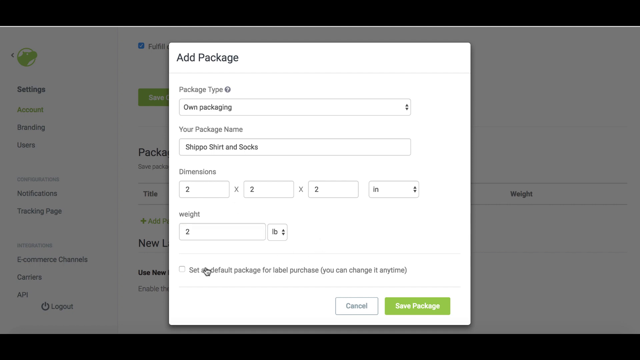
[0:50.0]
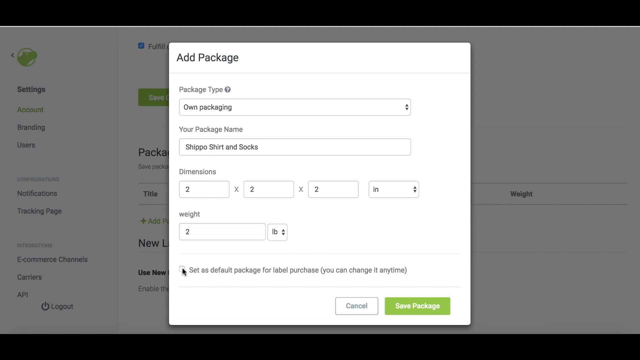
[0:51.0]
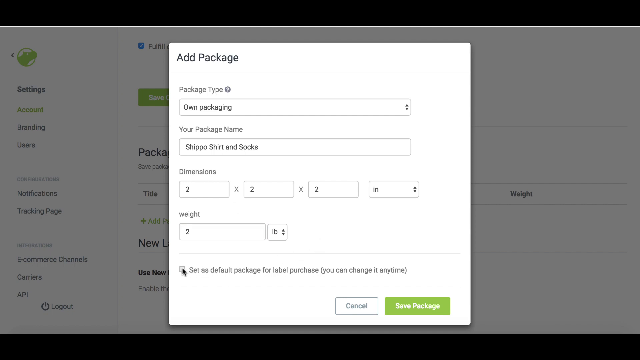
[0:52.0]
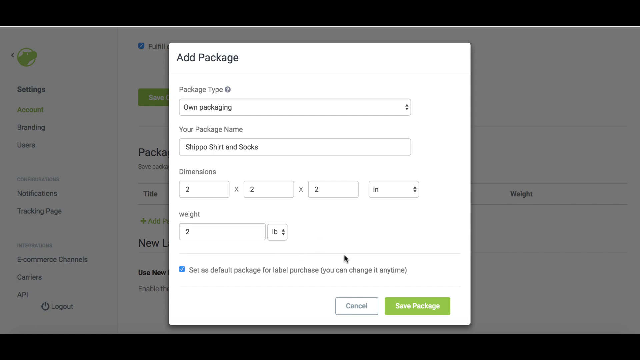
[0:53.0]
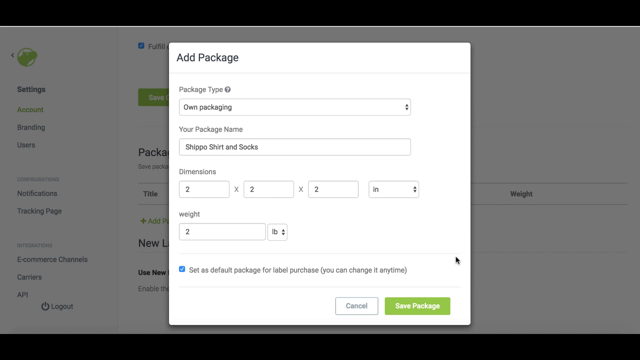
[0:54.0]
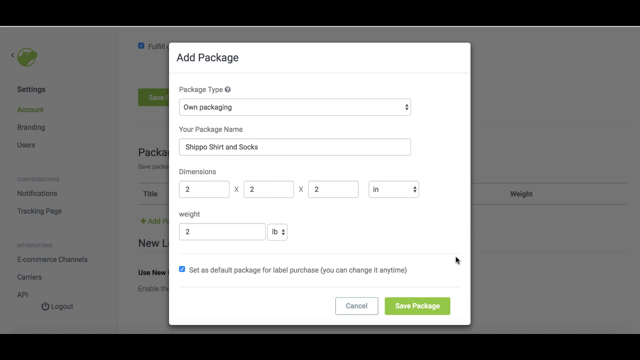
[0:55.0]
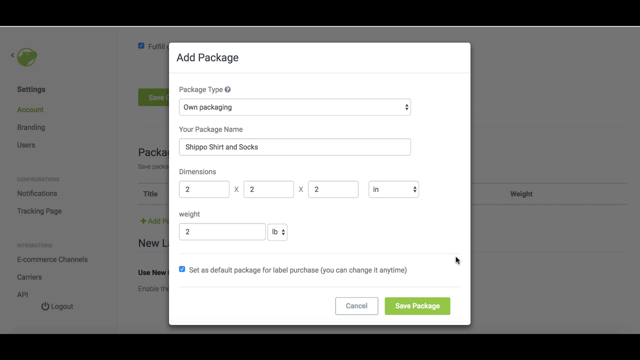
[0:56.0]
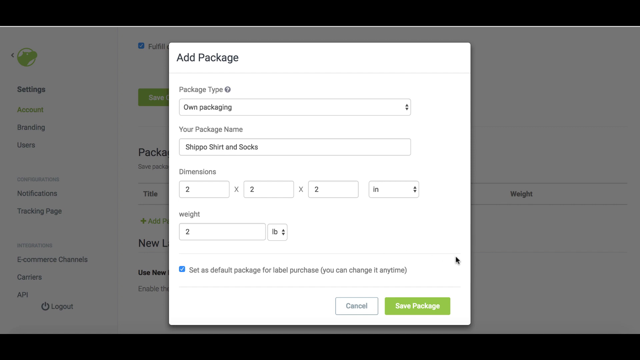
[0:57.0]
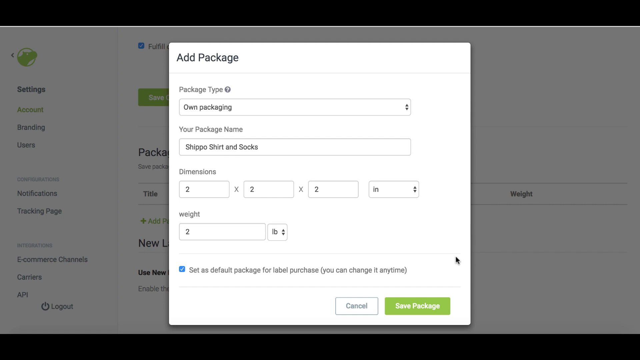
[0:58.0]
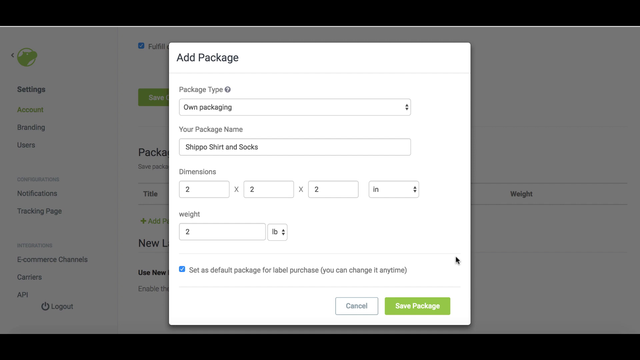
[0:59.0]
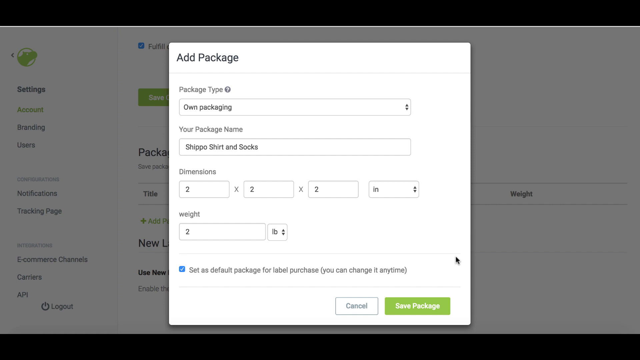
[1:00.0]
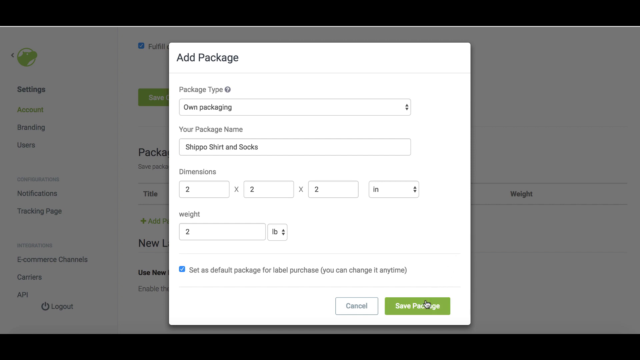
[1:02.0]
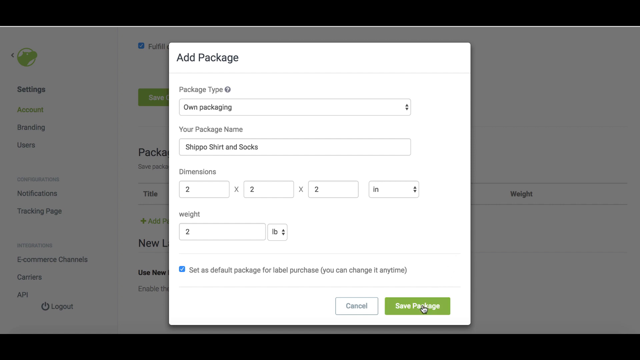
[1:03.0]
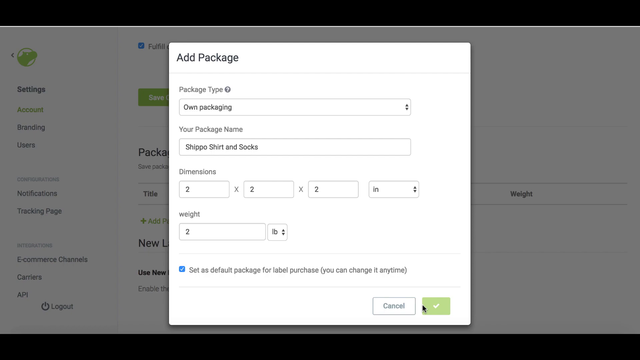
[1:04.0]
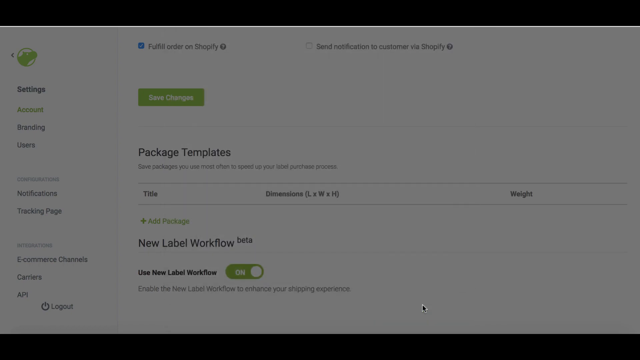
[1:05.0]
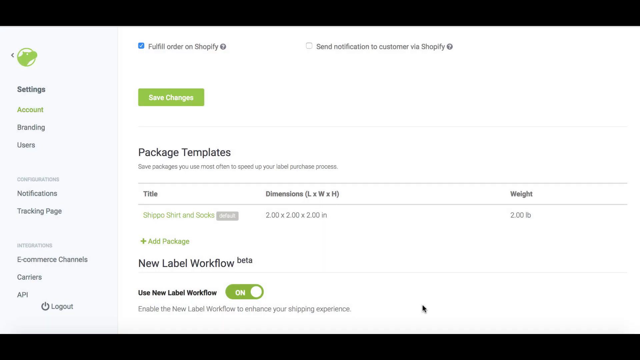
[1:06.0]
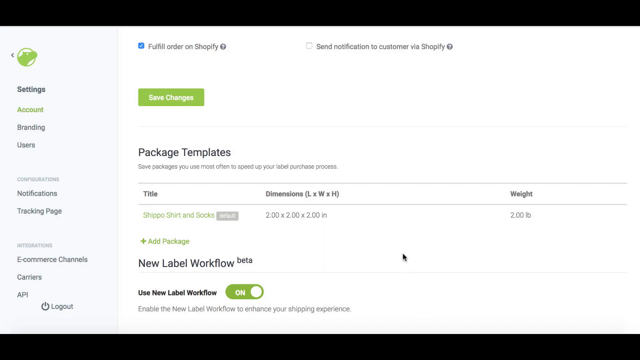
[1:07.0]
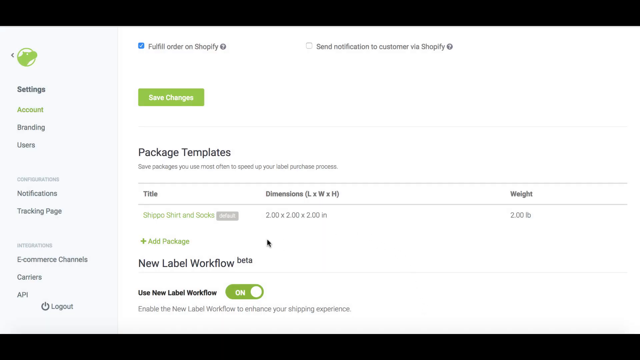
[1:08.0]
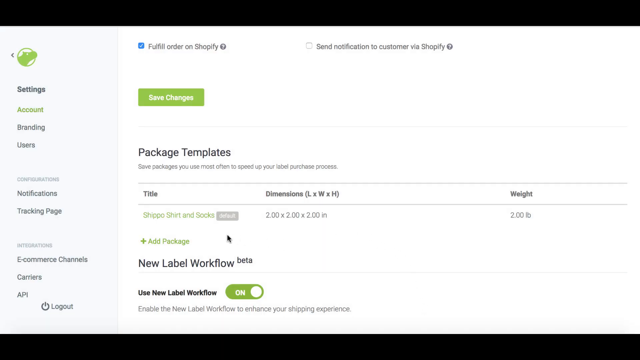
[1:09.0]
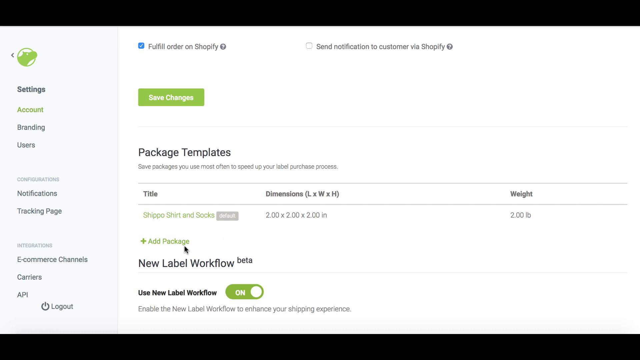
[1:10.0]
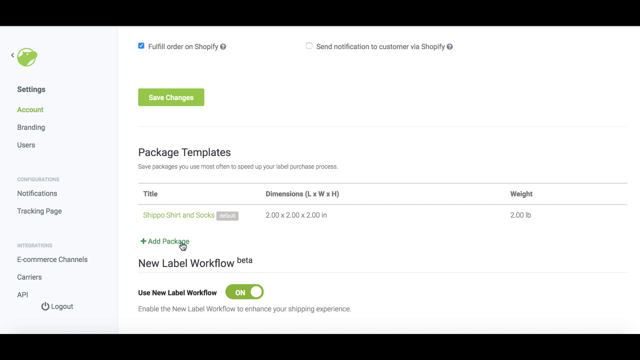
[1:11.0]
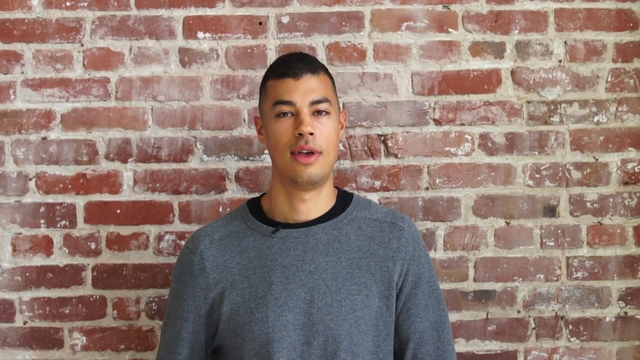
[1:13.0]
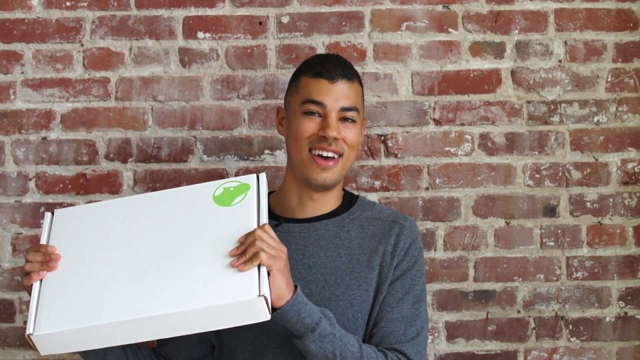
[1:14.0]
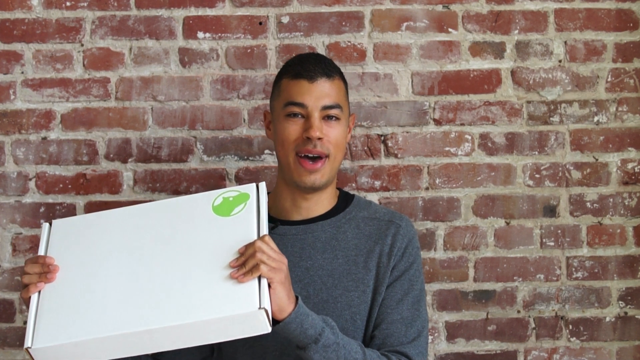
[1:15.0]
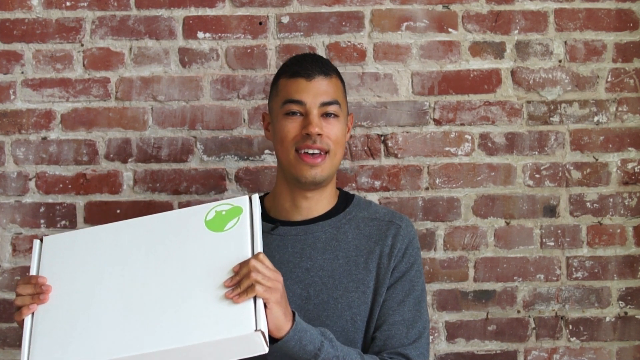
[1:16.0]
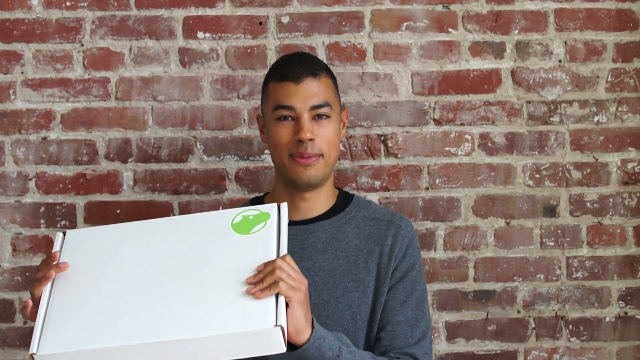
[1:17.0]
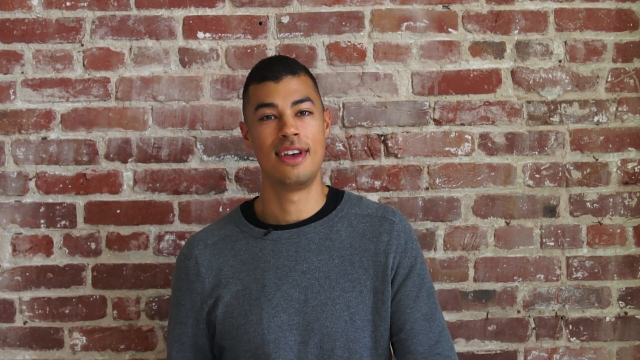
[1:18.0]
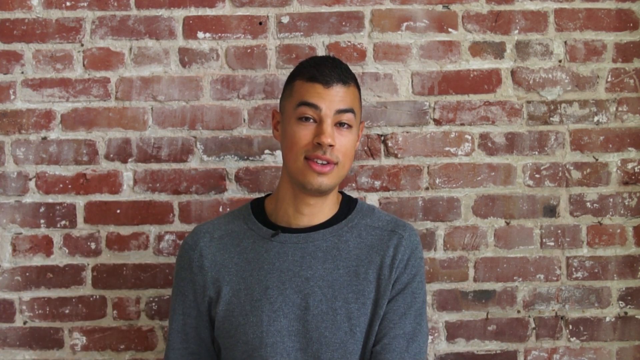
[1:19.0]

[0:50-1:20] A page on the Shippo website reads "add package." There are fields labeled "package type" and for the package name, the dimensions of the package and the weight, and at the bottom a tick box reads "set as default package for label purchase. You can change it anytime." The page shows the package being added to the account and then another package being added. Toward the end, the video switches back to the young man, who seems to be maybe in his early 20s and wears a gray sweater with a black undertop. Standing in front of the brick backdrop, he holds up a package, most likely the one entered on the Shippo website, and talks about it.